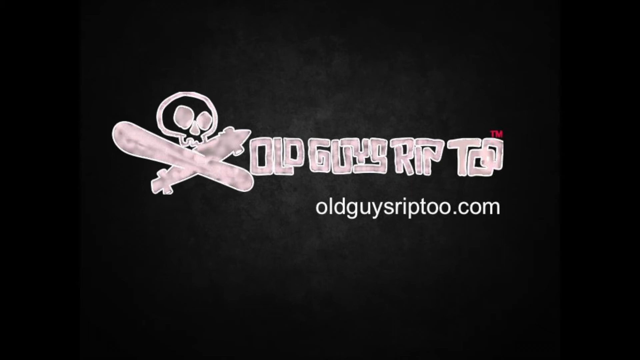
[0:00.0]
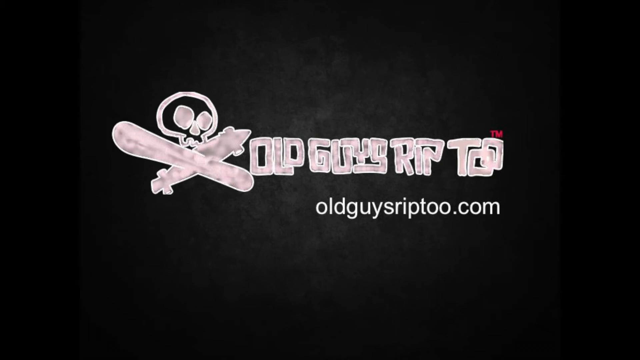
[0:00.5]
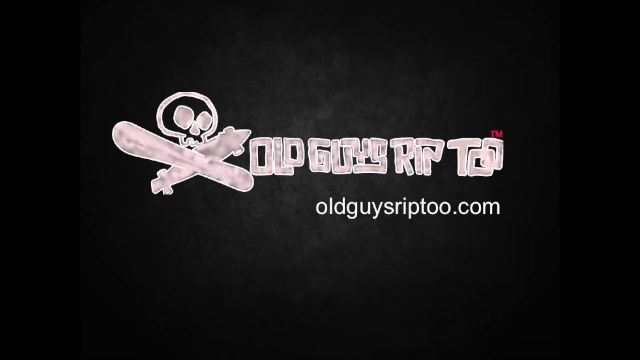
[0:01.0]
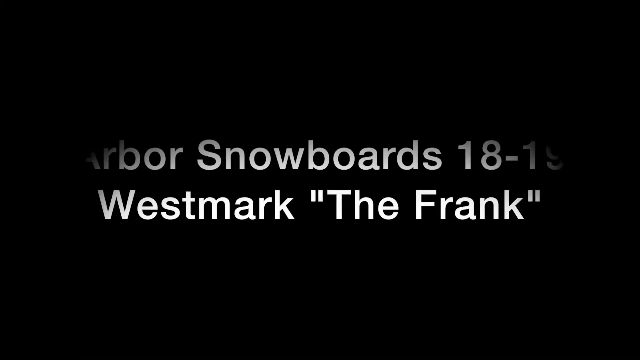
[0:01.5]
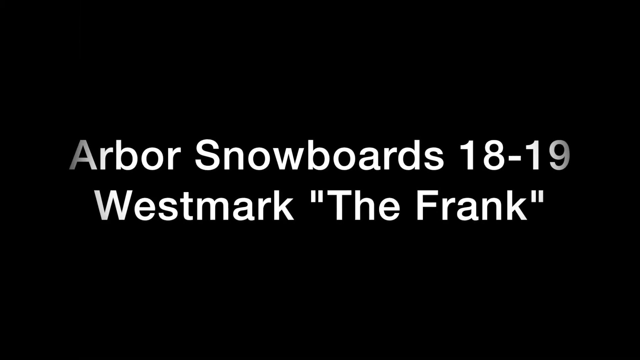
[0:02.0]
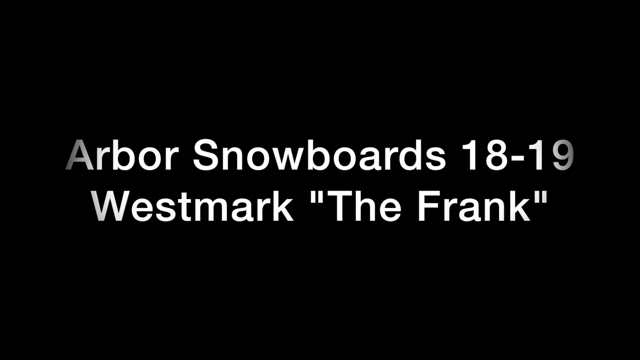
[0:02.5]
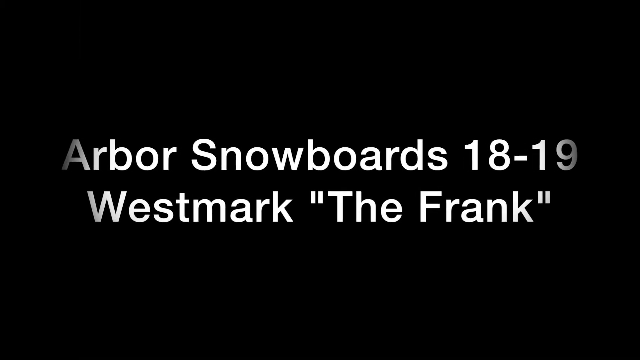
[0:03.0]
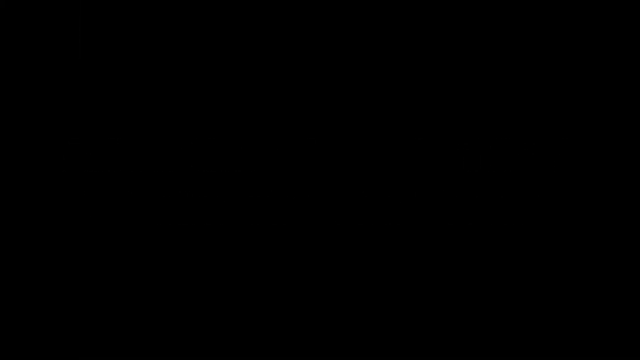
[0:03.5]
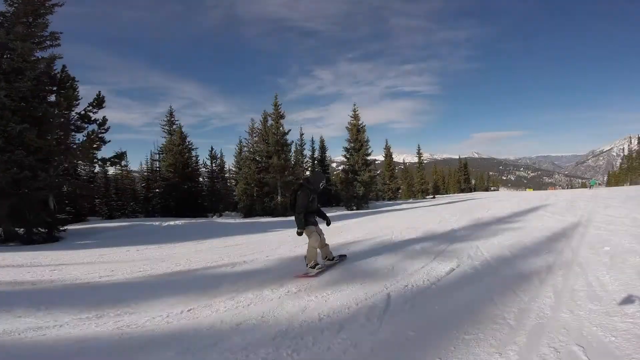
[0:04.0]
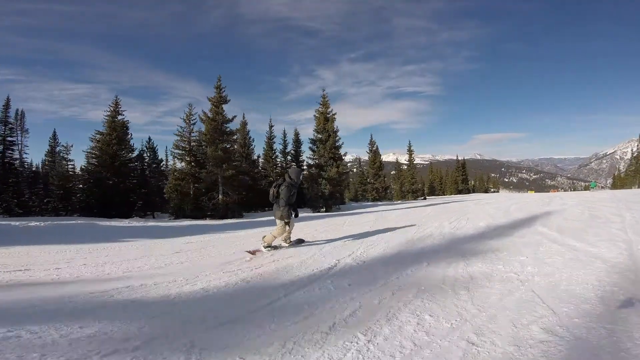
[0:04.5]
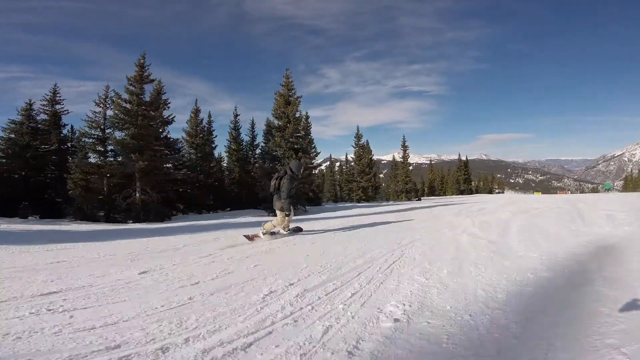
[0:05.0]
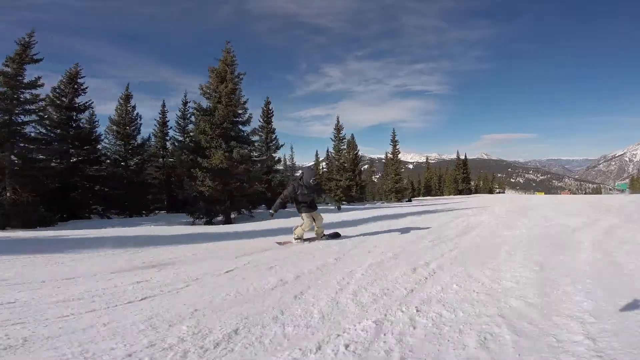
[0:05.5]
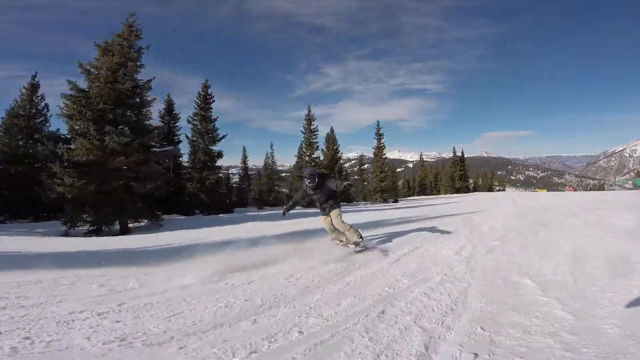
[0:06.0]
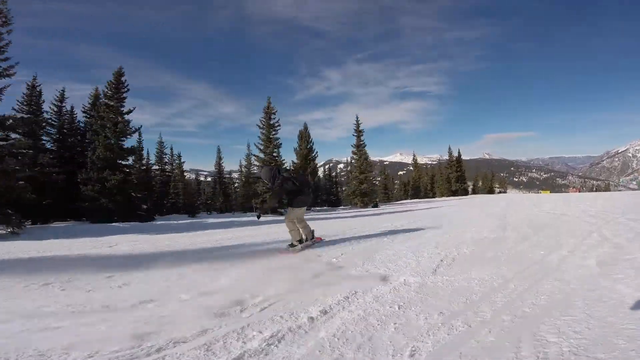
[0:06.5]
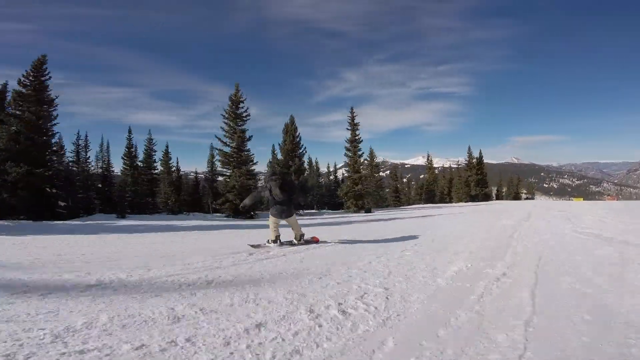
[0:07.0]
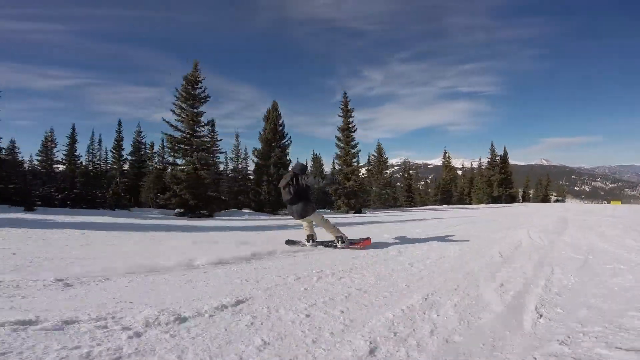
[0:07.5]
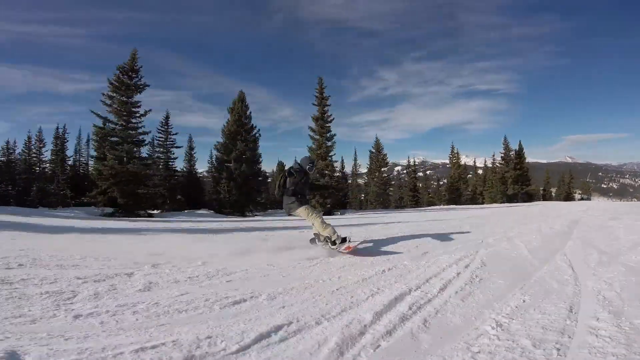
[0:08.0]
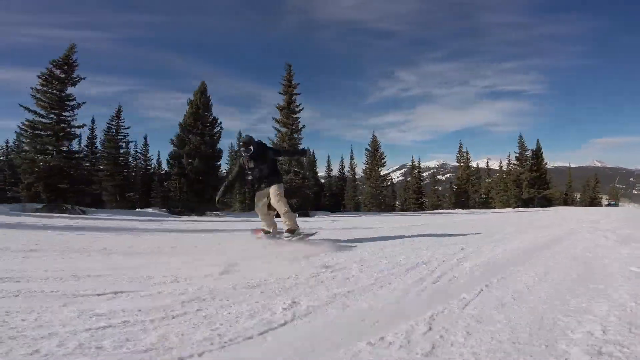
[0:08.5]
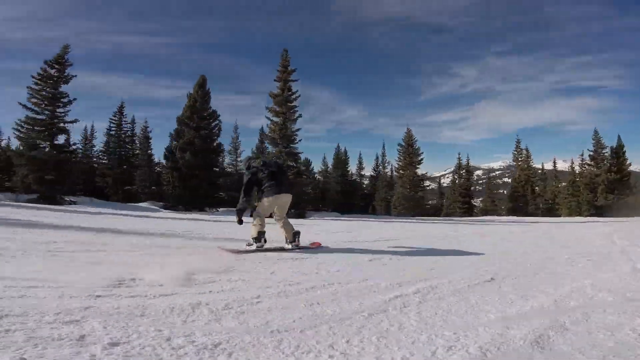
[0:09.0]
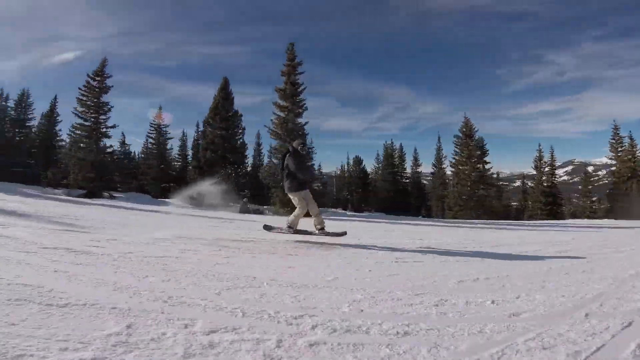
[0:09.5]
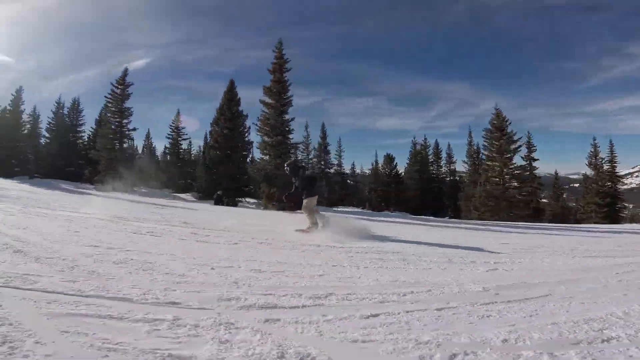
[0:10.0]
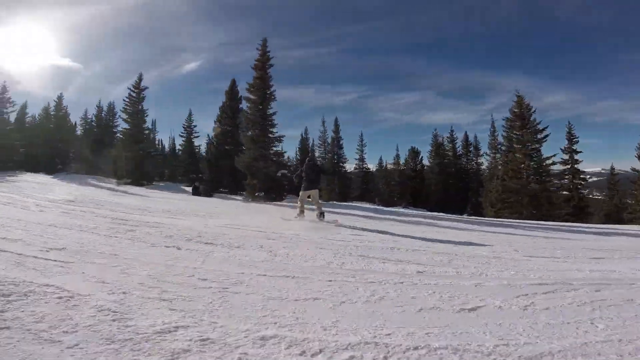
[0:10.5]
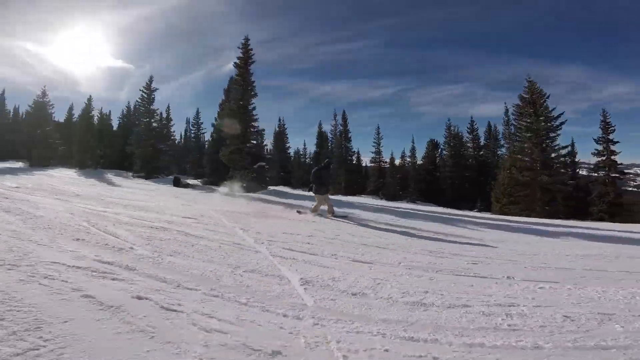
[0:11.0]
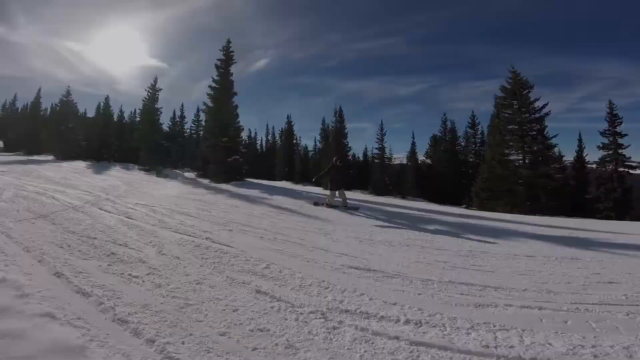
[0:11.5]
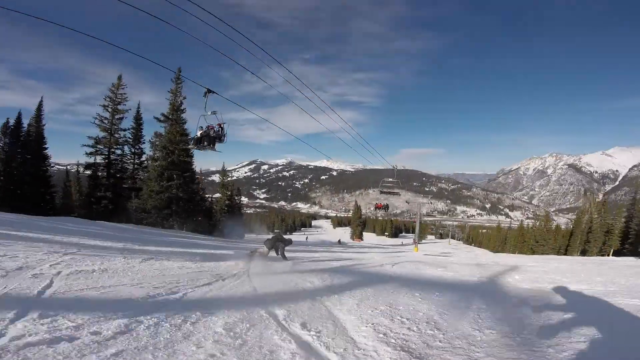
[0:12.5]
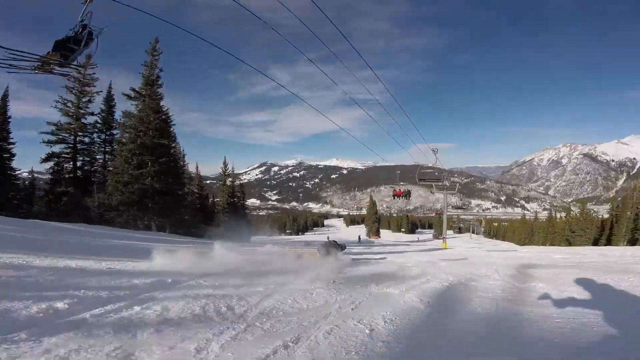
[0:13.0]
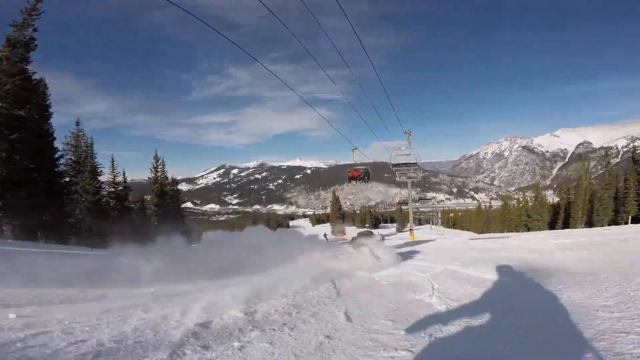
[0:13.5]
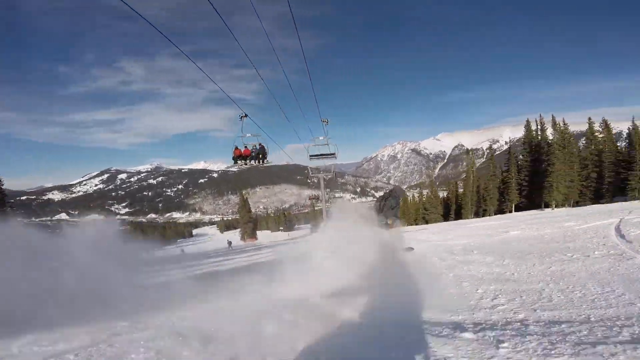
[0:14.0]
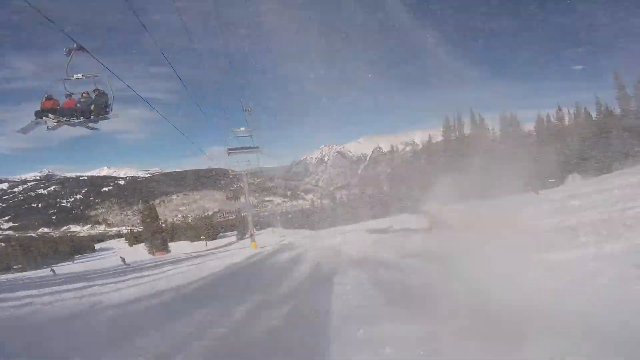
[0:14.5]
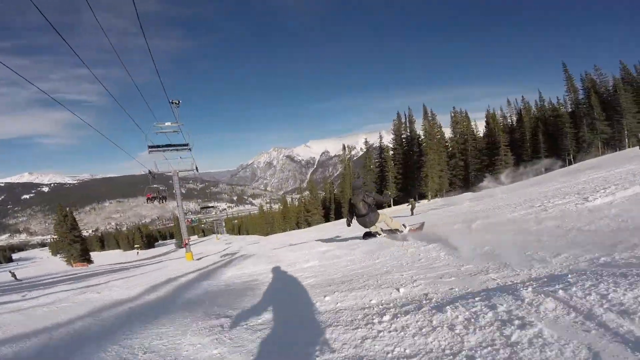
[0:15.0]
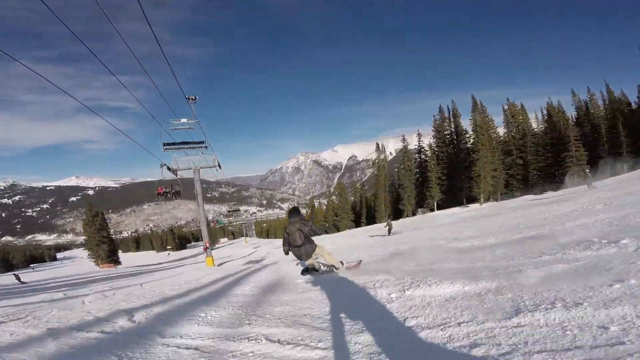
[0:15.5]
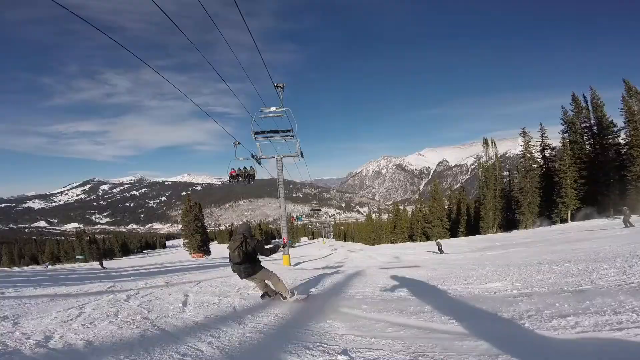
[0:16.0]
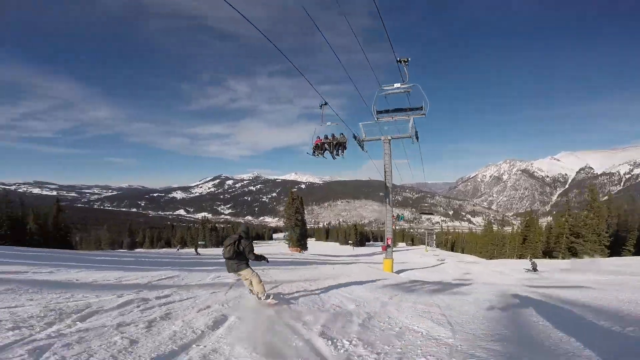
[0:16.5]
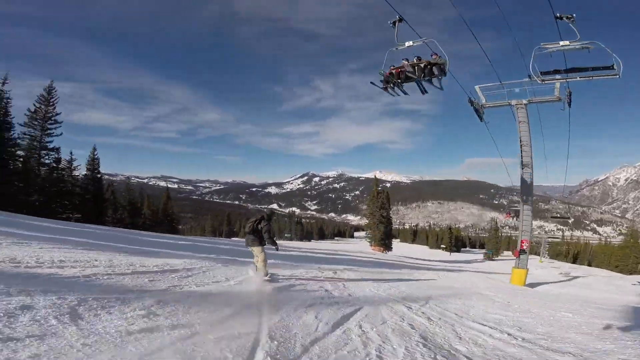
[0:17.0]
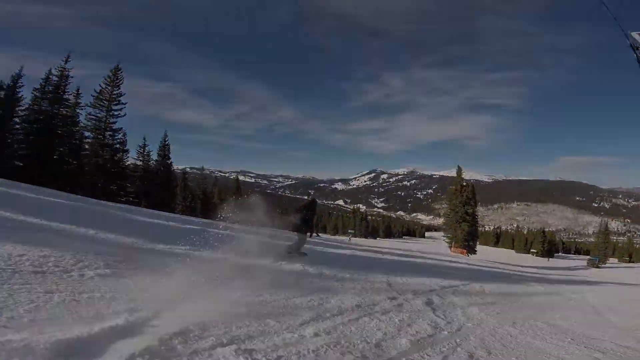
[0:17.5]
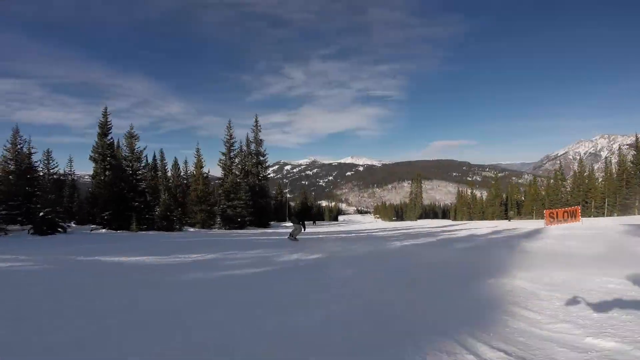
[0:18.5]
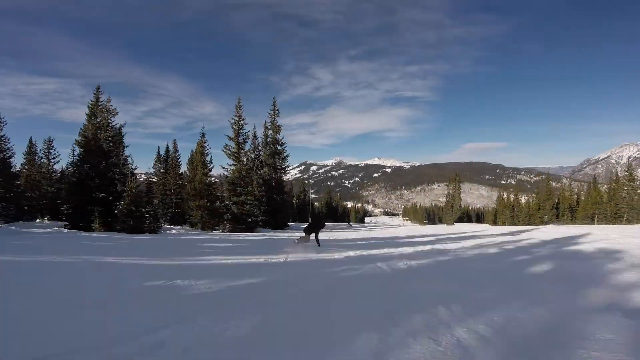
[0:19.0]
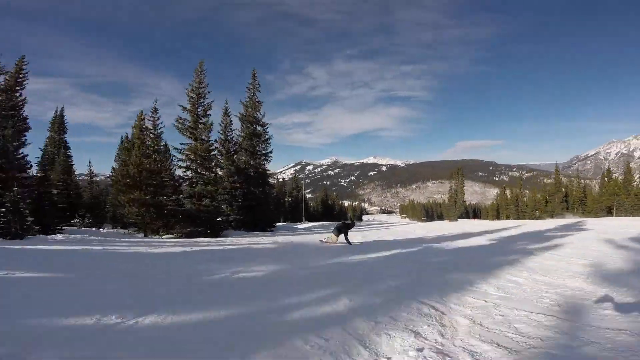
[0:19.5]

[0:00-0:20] The video opens with a logo made of block letters that look hand-drawn; they overlap, so they are hard to make out. At the beginning of it is what looks like a skull and crossbones, with a skull on top, and then it reads "old guys riptoo," with the website "oldguysriptoo.com" underneath. Next, white text appears against a black background: "Arbor Snowboards, 18-19, Westmark, The Frank." The video then switches to someone snowboarding on snow in the mountains, moving fairly fast toward the right and casting a fairly dark shadow across the snow in front of them. Above them is blue sky, with a bunch of green trees and mountains far in the background. He moves back and forth, turns sideways, then turns completely around so he faces back toward the left. He does this a couple of times, spinning in circles and hopping up in circles. In another shot he snowboards down very quickly underneath a ski lift, where a bunch of people in their chairs ride the lift up the mountain above him, while he goes back and forth across the mountain. Another shot shows him away from the ski lift, going down a ski run with green trees on both sides.